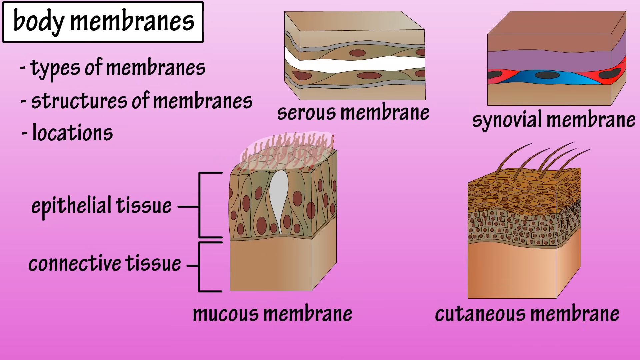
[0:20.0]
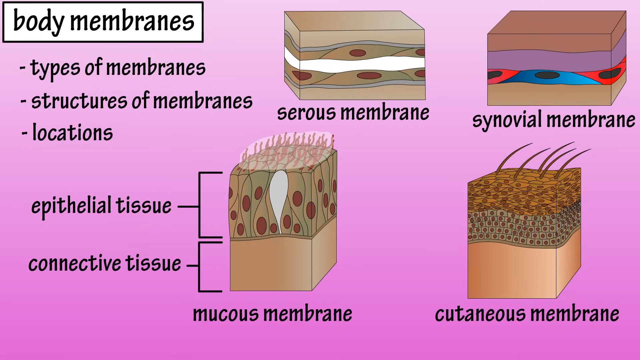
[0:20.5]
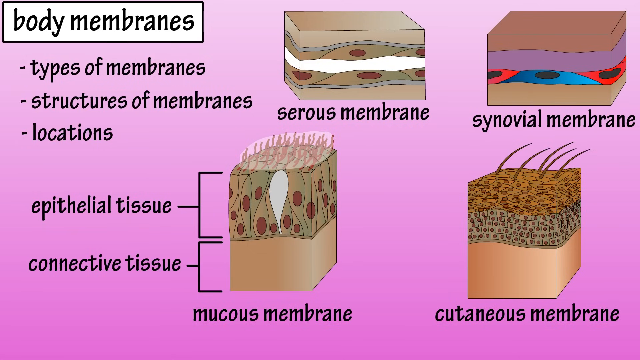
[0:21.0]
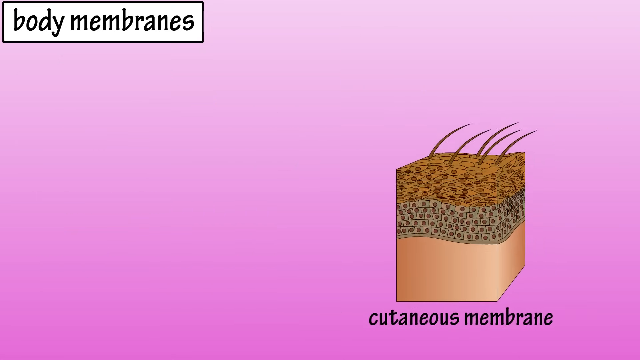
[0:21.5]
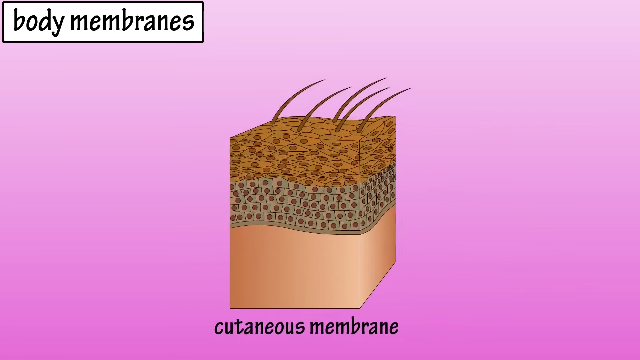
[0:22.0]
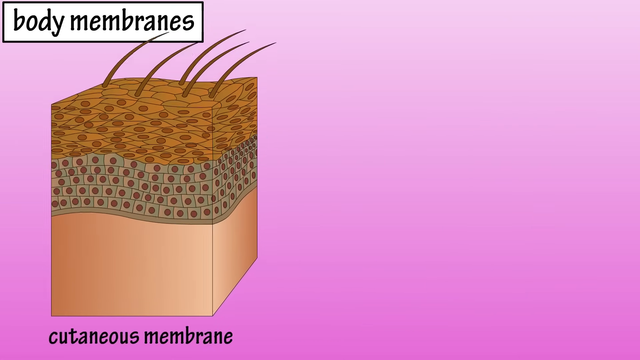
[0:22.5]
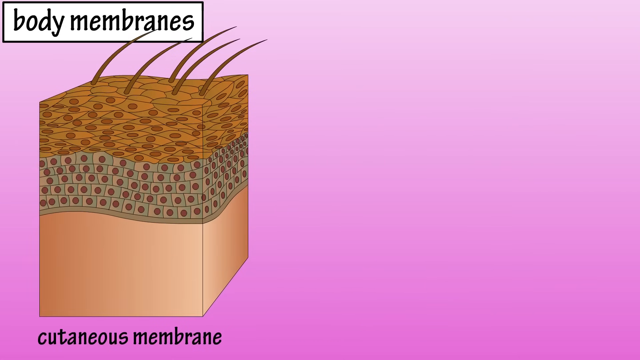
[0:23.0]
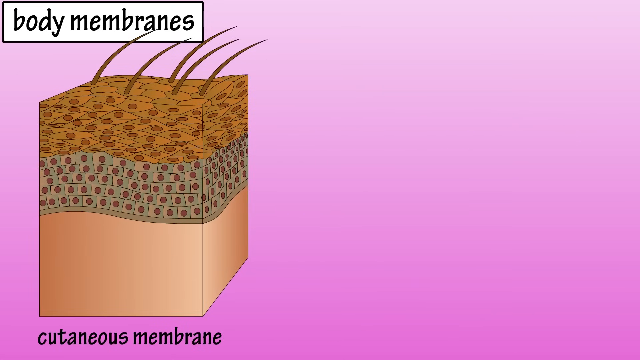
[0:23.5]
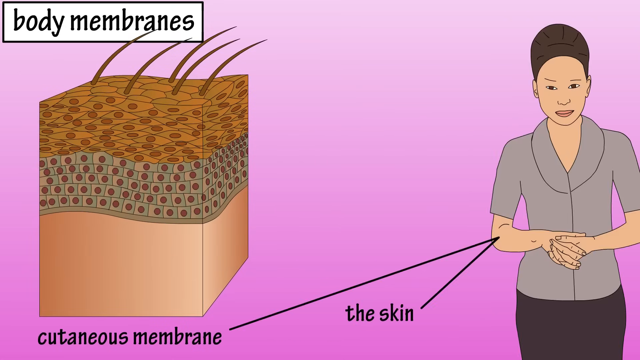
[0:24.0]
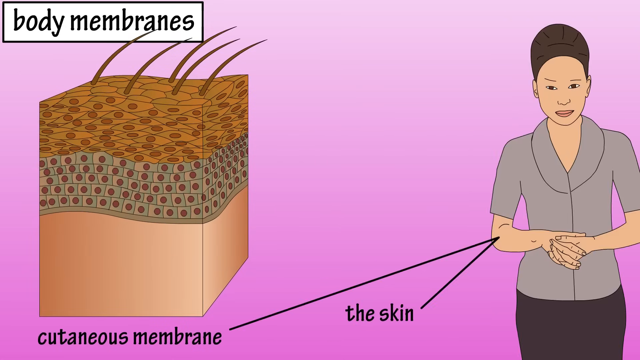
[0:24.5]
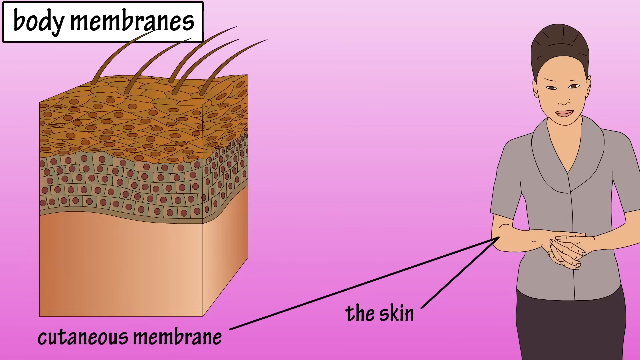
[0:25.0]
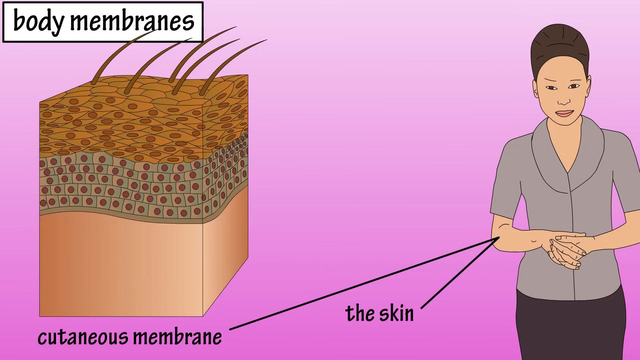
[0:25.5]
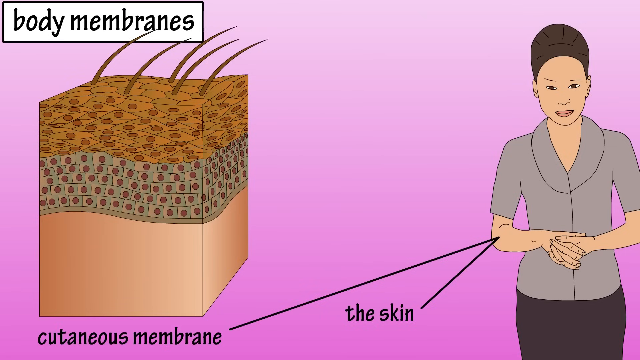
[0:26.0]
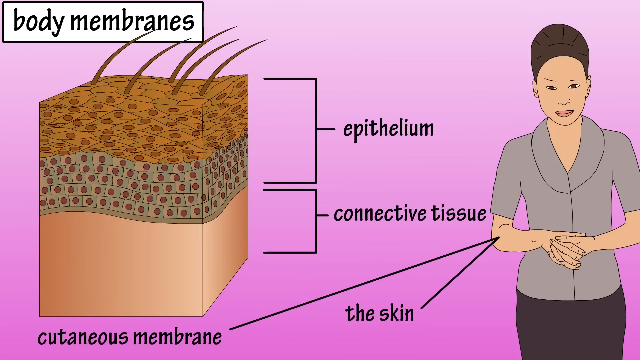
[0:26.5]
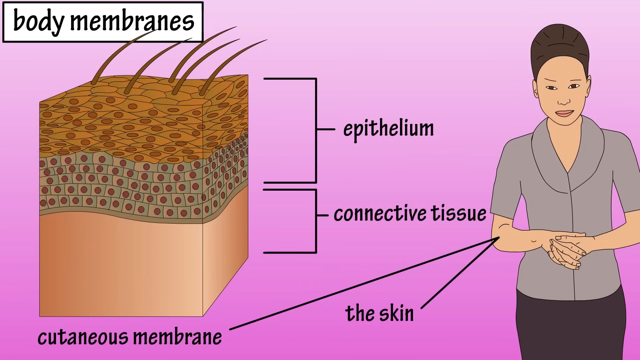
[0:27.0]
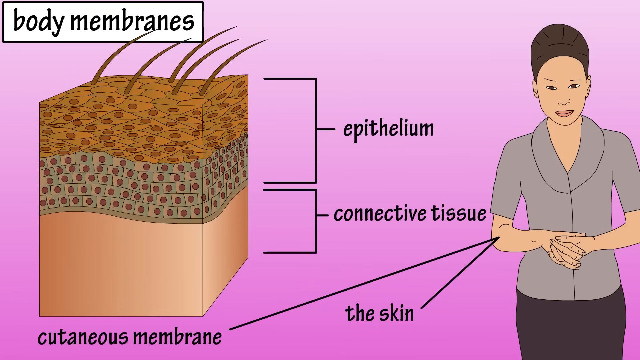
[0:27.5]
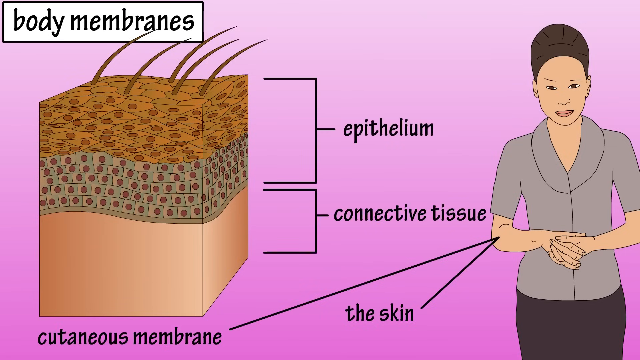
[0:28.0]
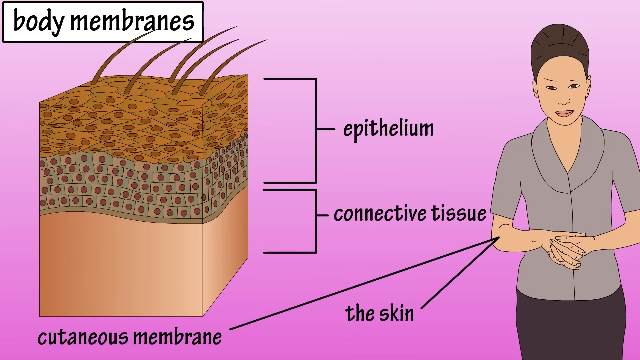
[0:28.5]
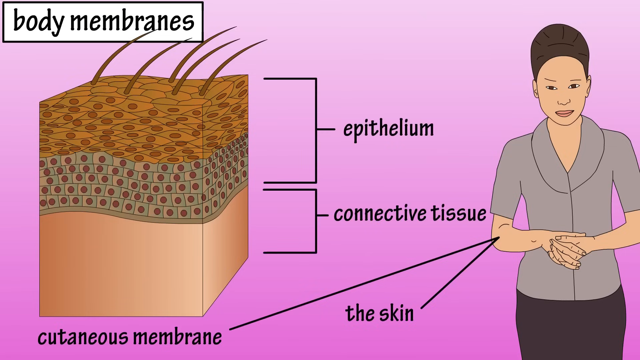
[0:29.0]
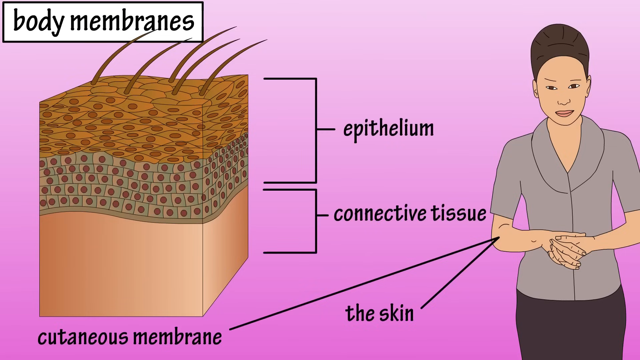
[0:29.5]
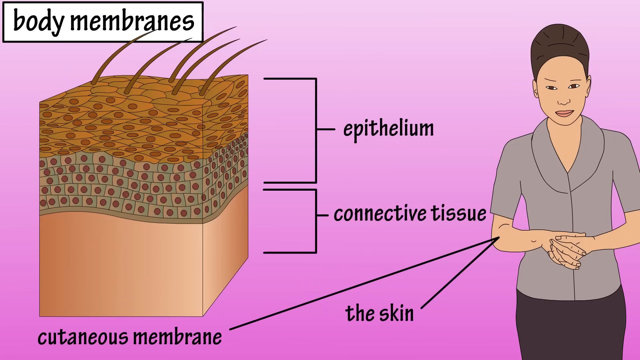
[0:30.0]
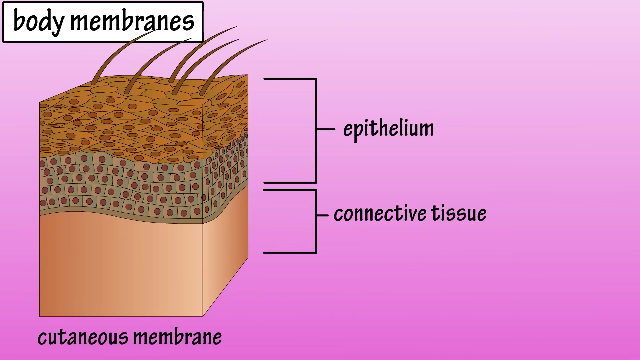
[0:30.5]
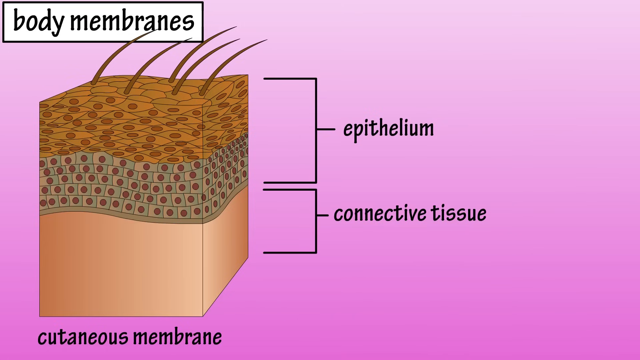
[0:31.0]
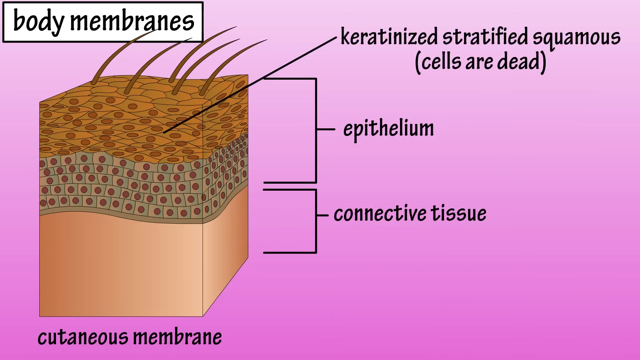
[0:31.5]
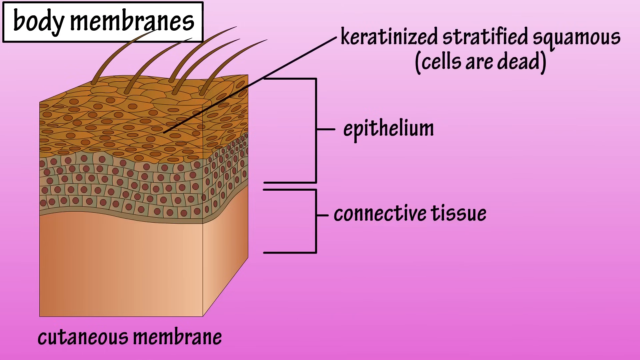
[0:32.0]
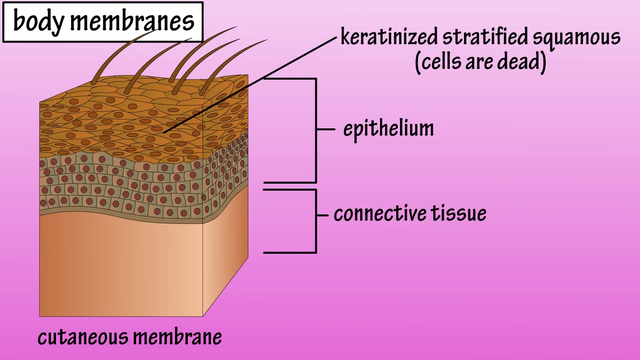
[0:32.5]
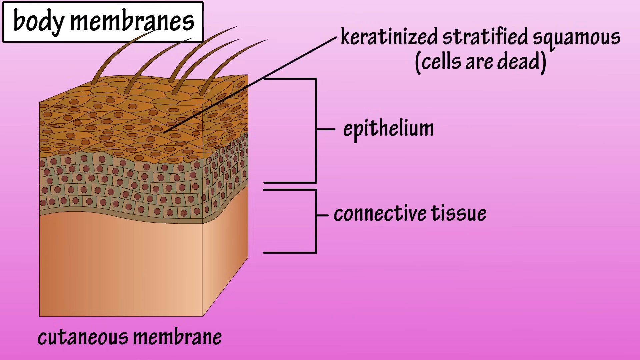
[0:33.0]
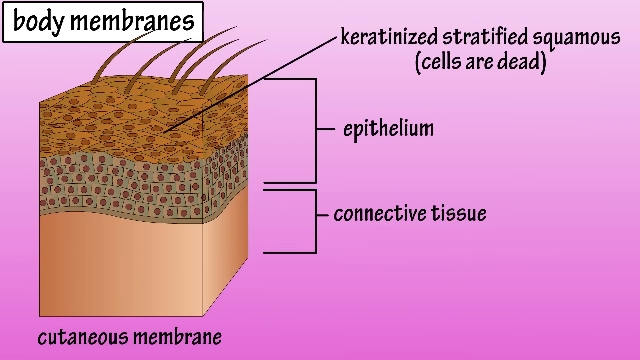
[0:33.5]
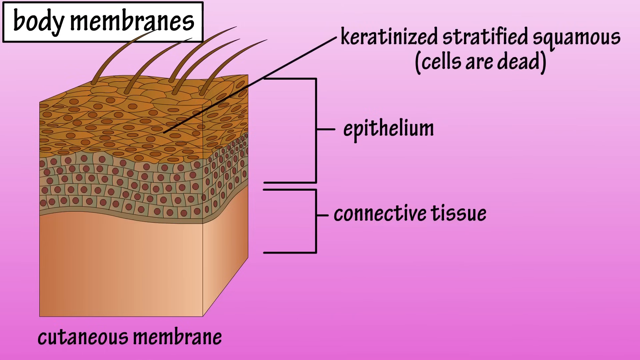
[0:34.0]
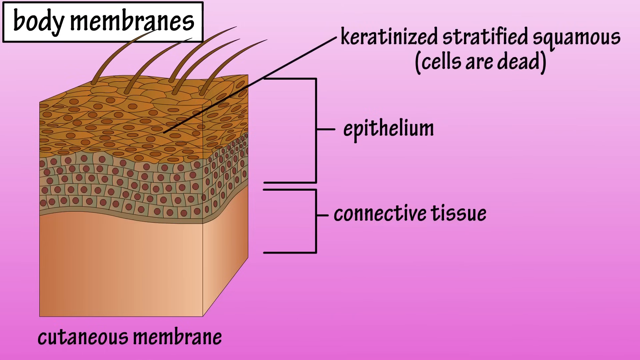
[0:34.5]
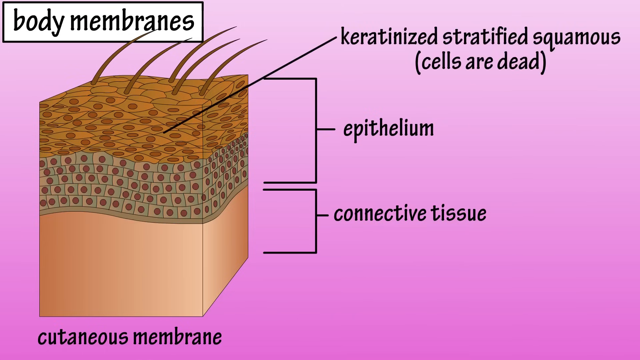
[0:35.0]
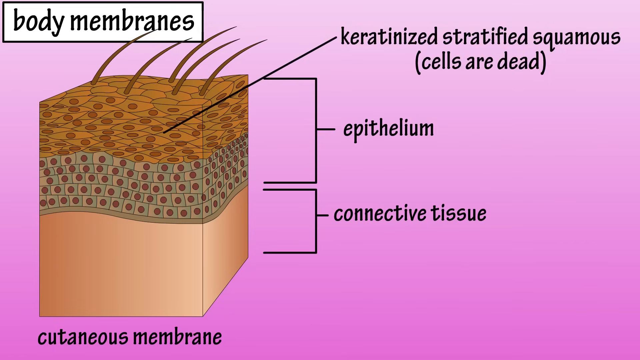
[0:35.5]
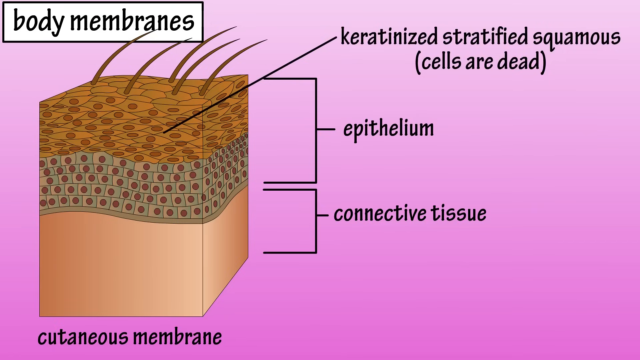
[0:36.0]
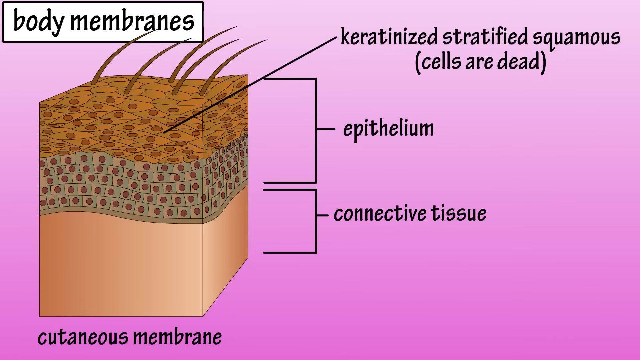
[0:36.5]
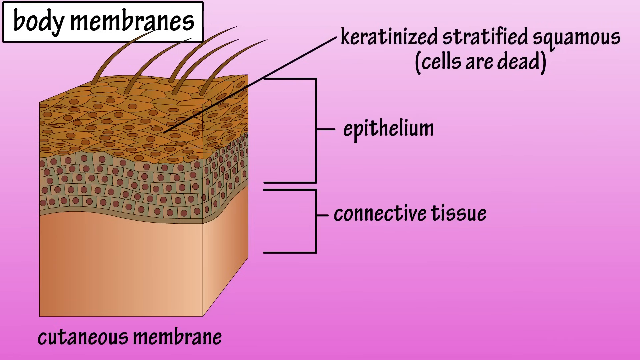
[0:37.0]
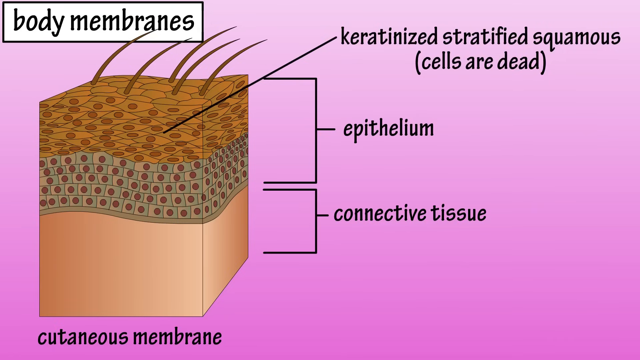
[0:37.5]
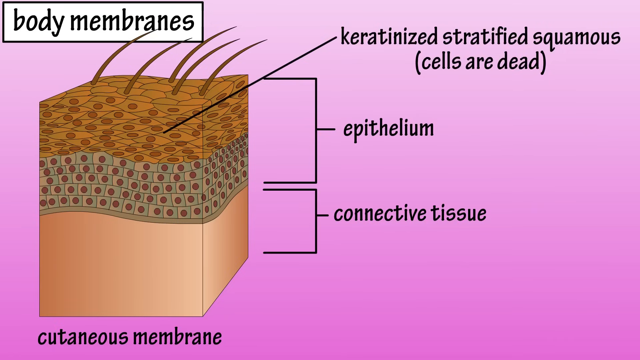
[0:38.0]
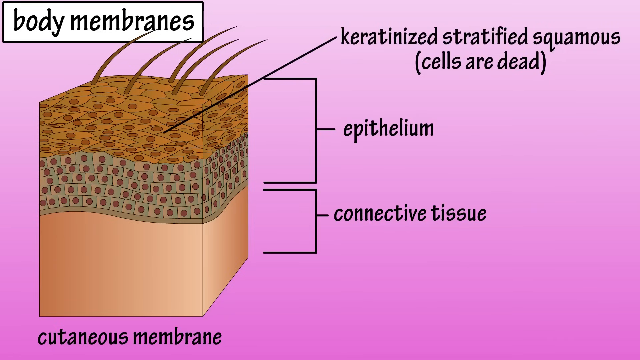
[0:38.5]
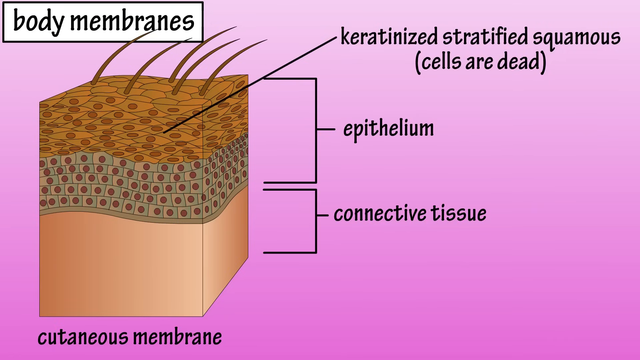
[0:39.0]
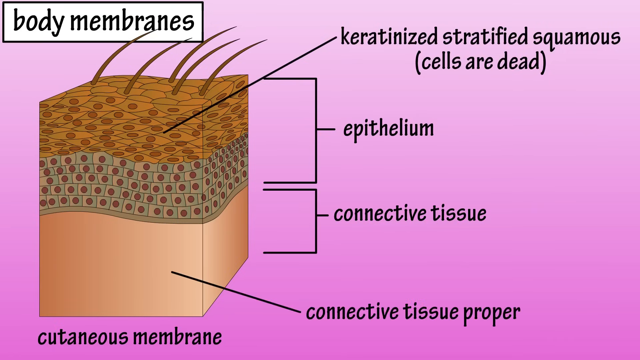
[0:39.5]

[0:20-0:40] All other elements are removed from the screen except the title text box in the top left corner and the cutaneous membrane image with its subtext. The video then zooms in on this cross-section cube of the cutaneous membrane until the image runs the full length of the screen, overlaying the top left title and taking up the left half of the screen. An arrow is drawn to an image of an illustrated person on the right side of the screen, pointing toward the skin on the right elbow, and another arrow shows the label "the skin". Text labels then appear for the cross-section diagram in the middle of the screen, with brackets indicating which layer of the picture each label corresponds to: the top one reads "epithelium" and the bottom one reads "connective tissue". The person image then disappears and is replaced by the text "keratinized stratified squamous" with "cells are dead" in brackets, apparently referring to the very top of the epithelium layer.